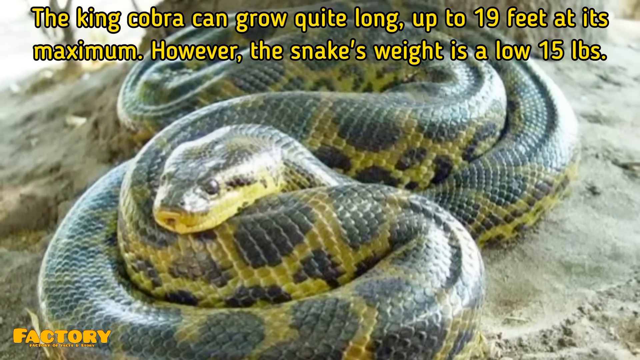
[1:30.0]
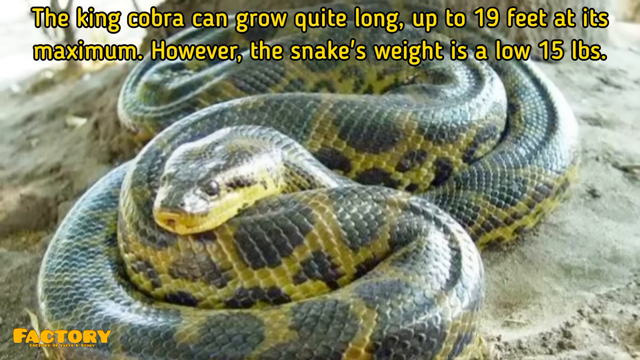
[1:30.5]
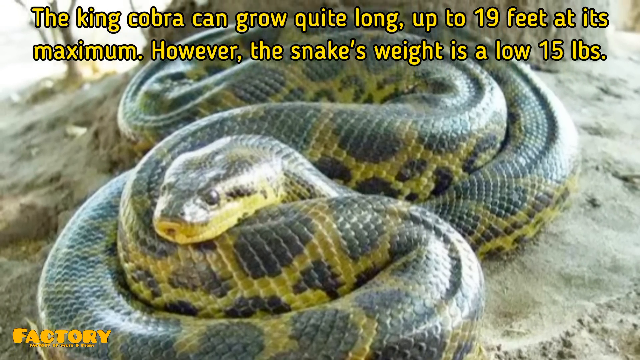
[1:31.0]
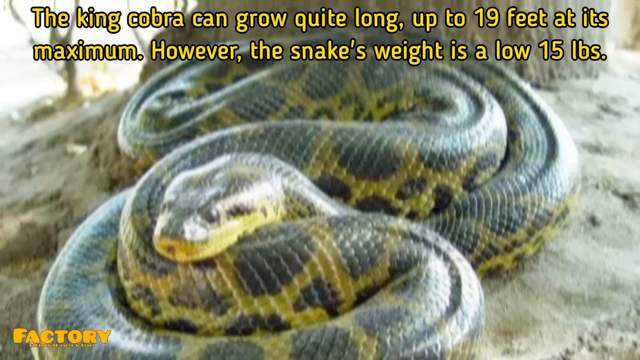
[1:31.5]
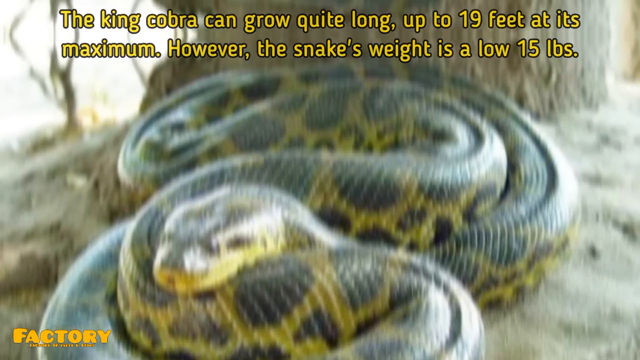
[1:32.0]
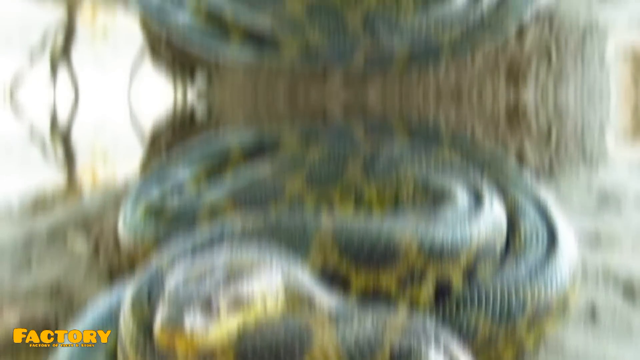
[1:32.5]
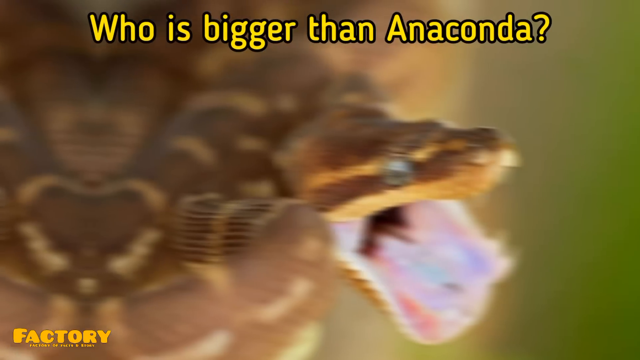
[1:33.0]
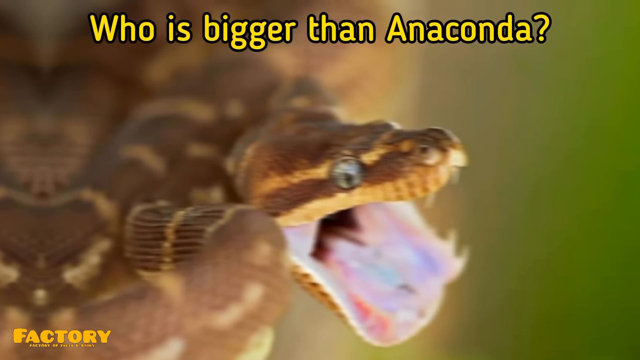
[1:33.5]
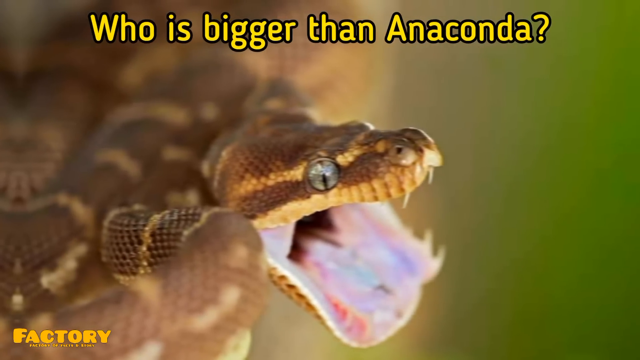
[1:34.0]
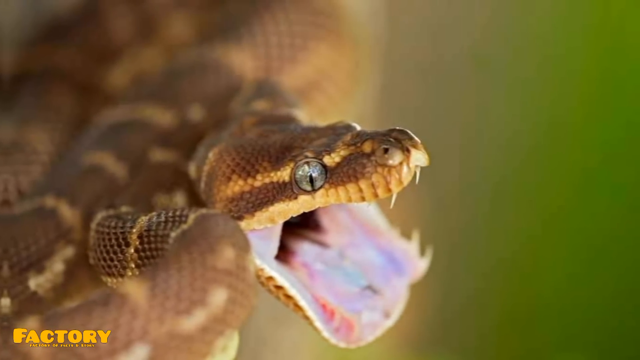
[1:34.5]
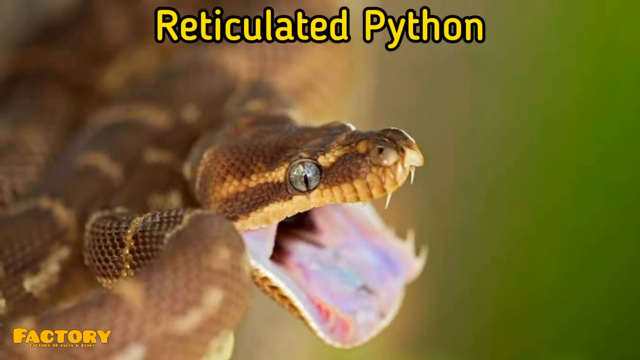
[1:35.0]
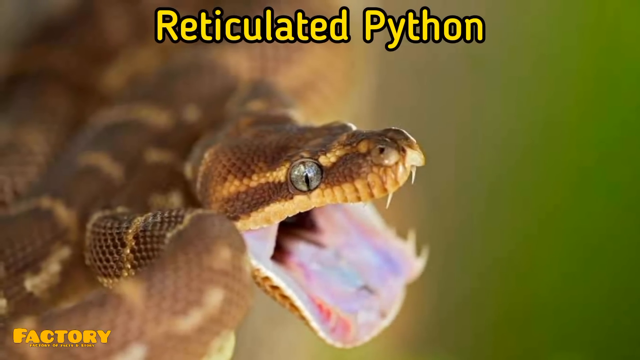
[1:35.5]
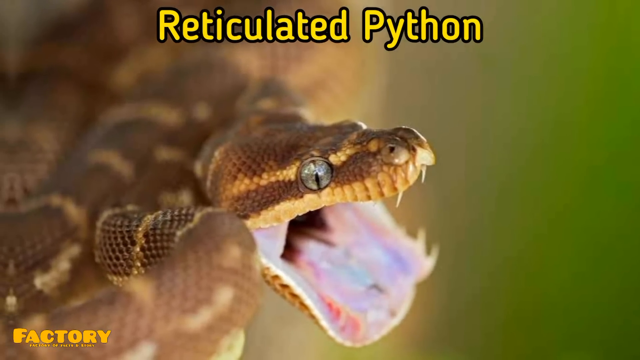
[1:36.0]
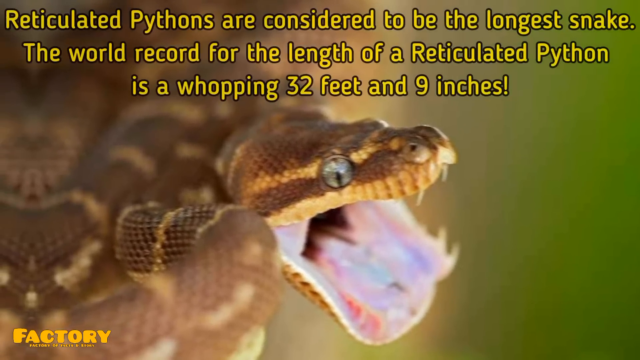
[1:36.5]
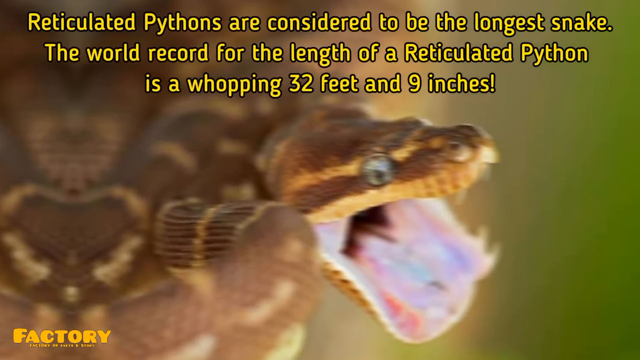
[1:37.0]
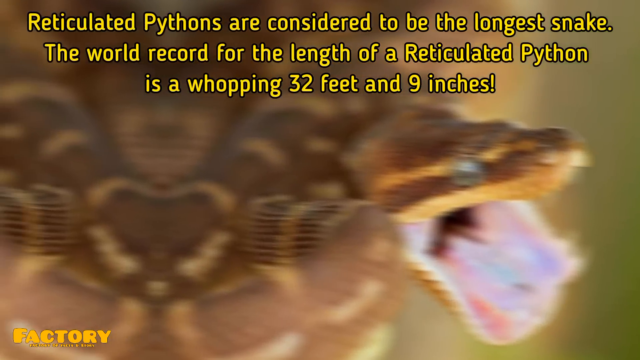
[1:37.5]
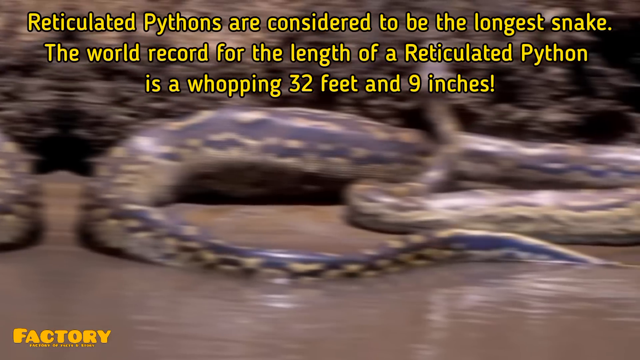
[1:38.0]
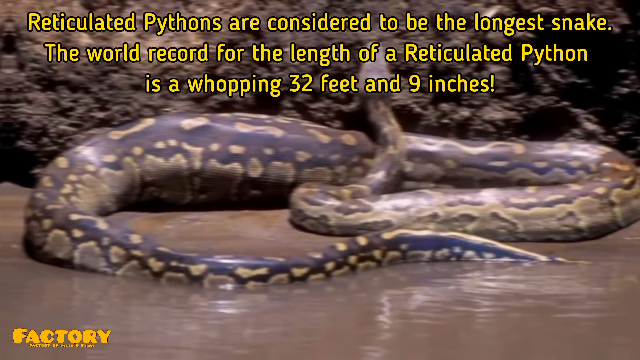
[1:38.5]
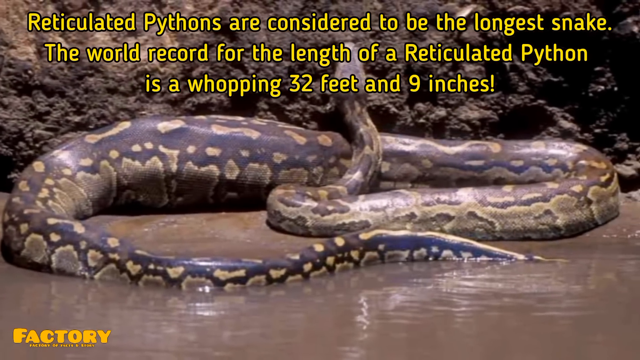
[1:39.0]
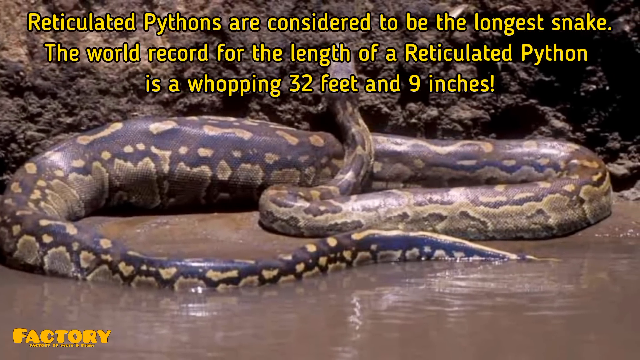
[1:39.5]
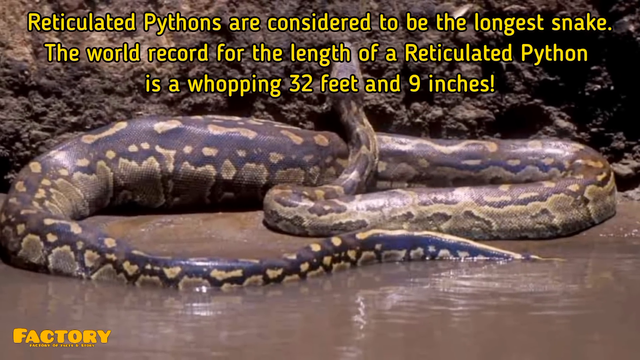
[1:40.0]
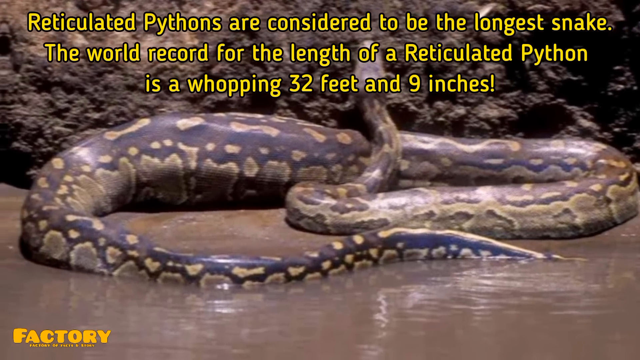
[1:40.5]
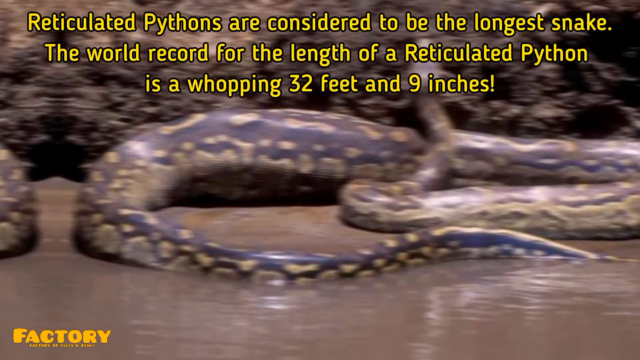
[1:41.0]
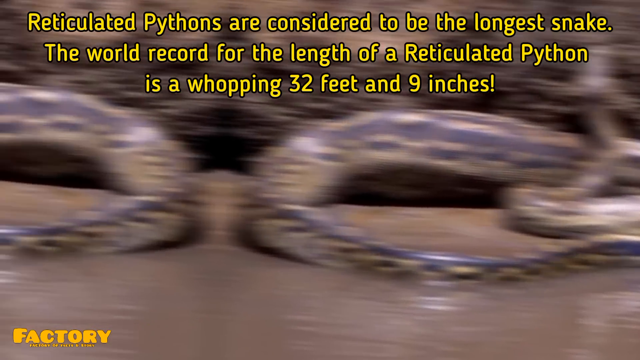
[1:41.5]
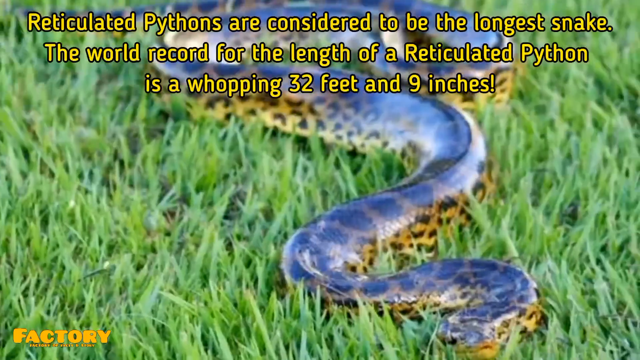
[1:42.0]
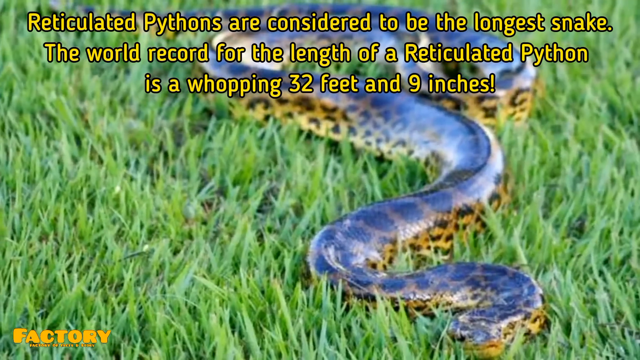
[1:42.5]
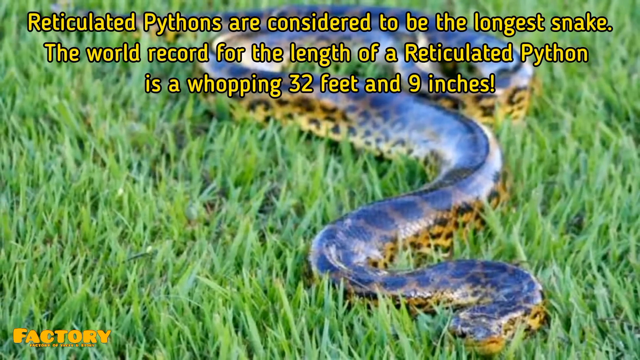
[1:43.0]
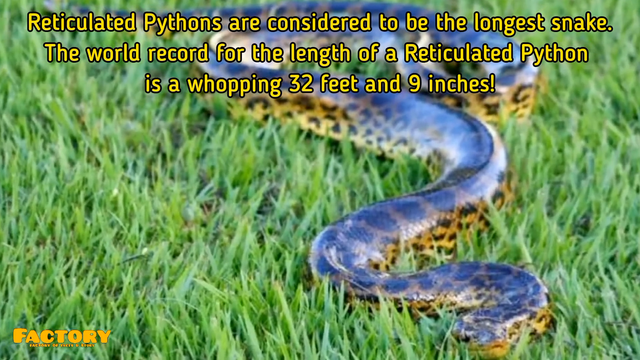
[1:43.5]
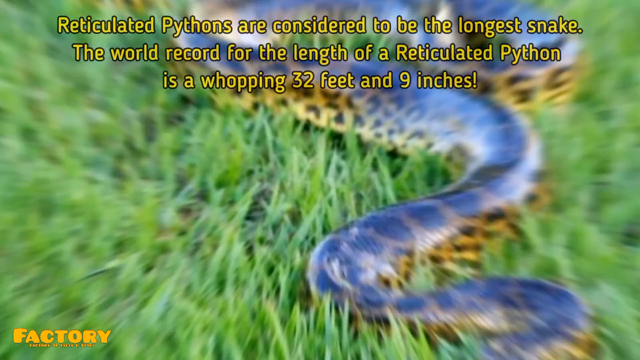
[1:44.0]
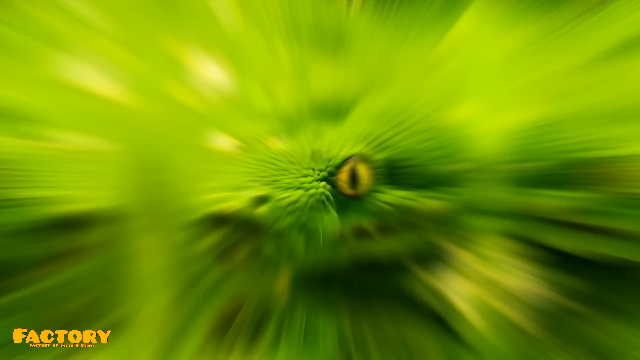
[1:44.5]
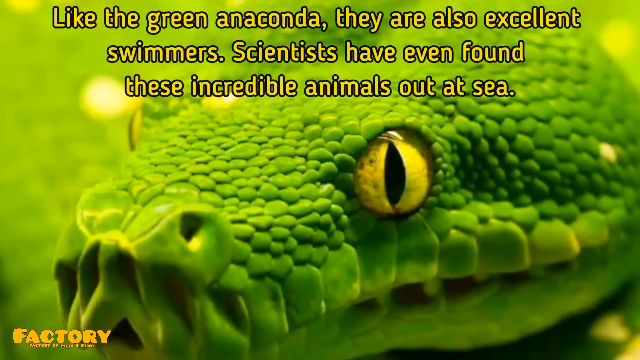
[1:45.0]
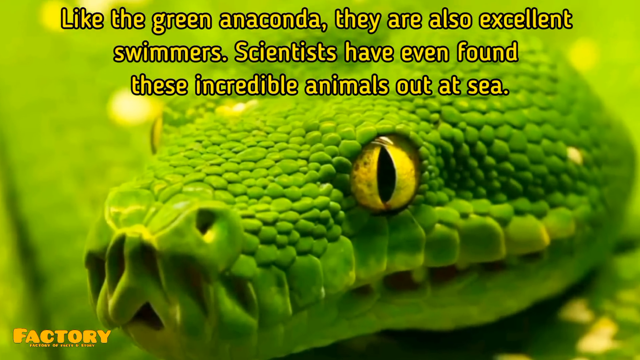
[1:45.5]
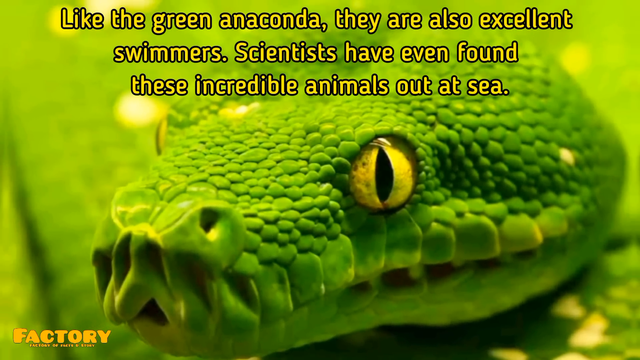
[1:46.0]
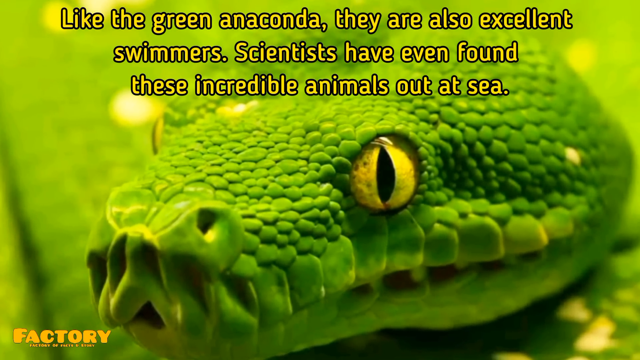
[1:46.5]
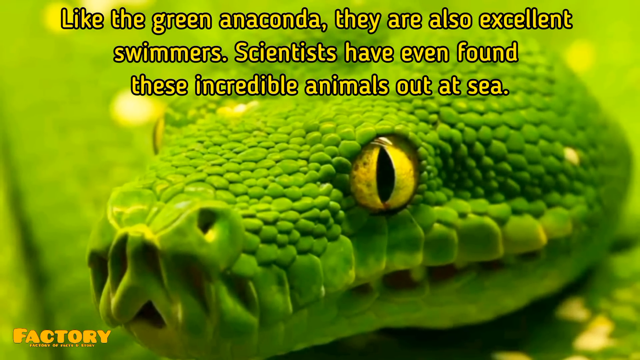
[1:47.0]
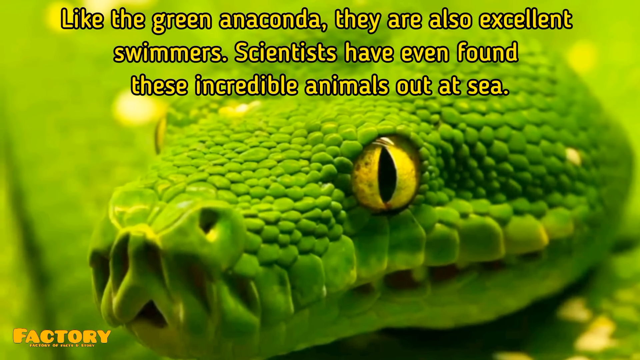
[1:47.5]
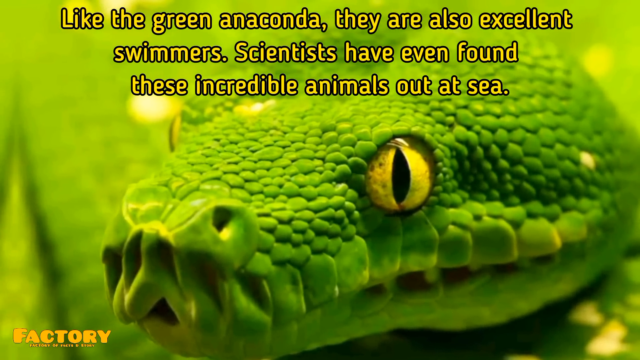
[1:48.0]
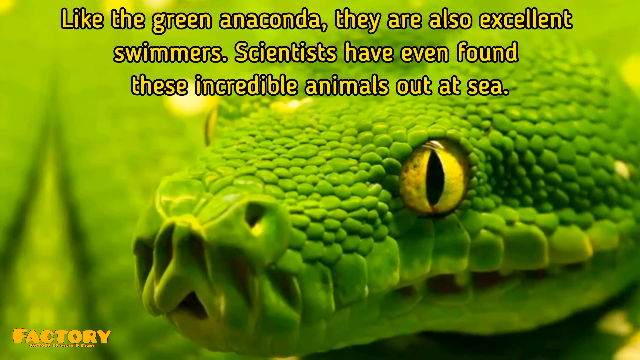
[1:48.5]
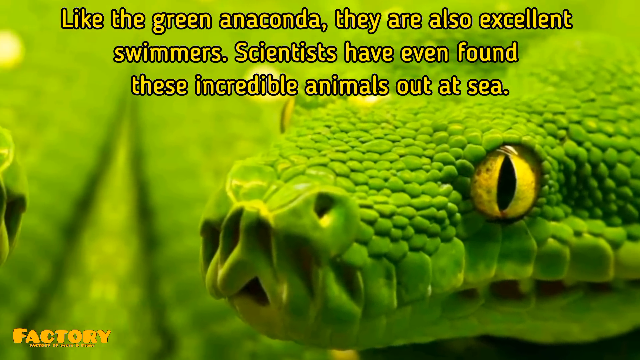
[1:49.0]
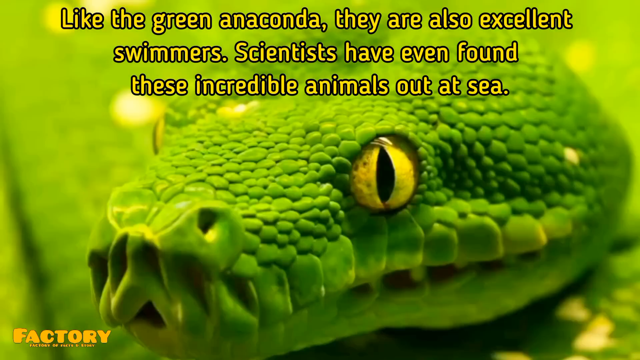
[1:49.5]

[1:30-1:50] A close-up shows a brown anaconda with light brown stripes, looking to the right with its mouth open, very silverish eyes and a pink tongue. Yellow text at the top reads "who is bigger than anaconda." More yellow text appears reading "reticulated python," followed by "reticulated pythons are considered to be the longest snake. World record for the length of a reticulated python is a whopping 32 feet and nine inches." The scene changes to a black and brown snake on top of very mucky, dirty, very brown water. Next comes a snake on a grass field, then a quick switch to a very greenish snake with very yellowish eyes. Text at the top reads "like the green anaconda, they are also excellent swimmers. Scientists have even found these incredible animals out at sea."